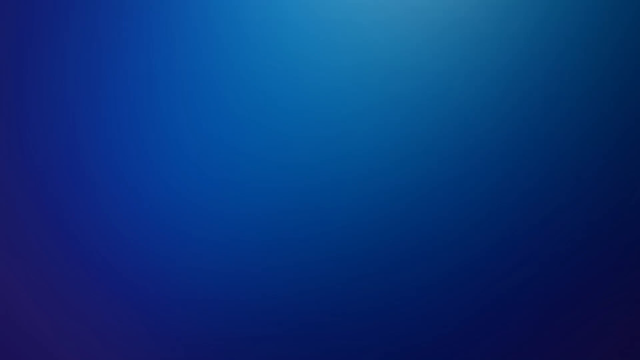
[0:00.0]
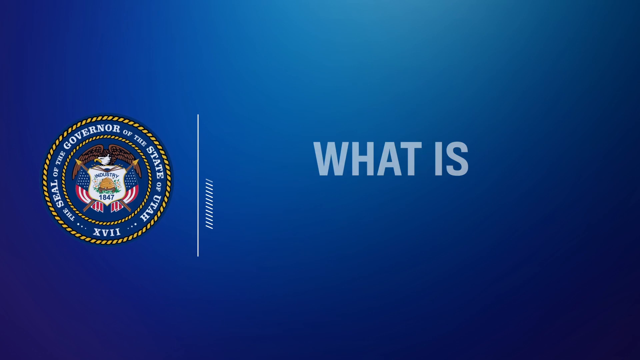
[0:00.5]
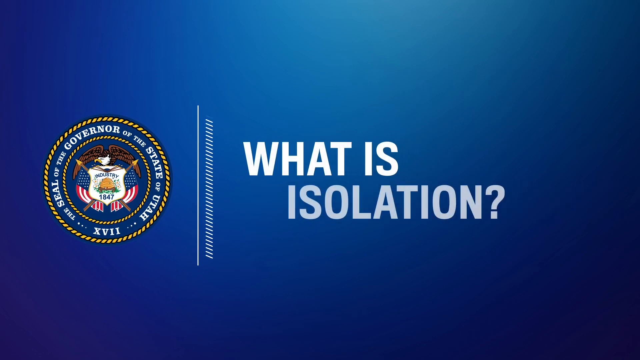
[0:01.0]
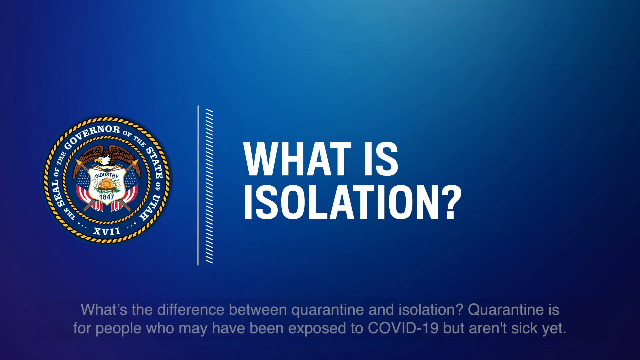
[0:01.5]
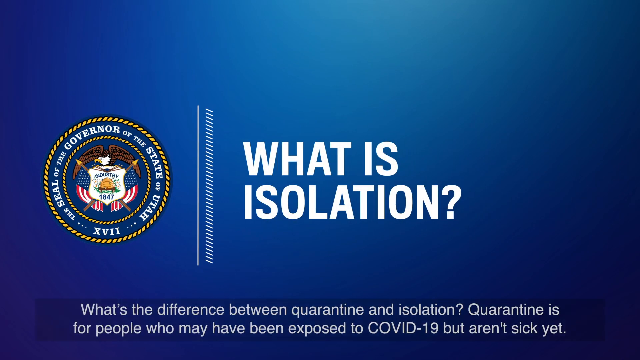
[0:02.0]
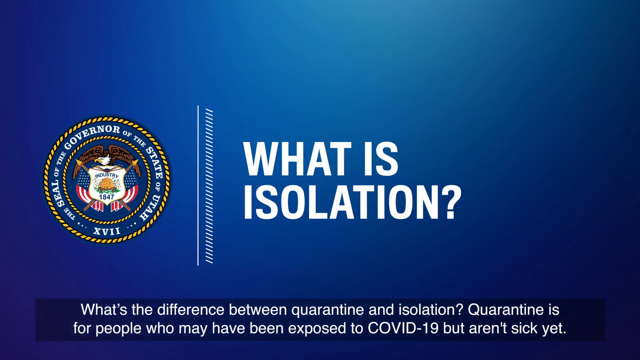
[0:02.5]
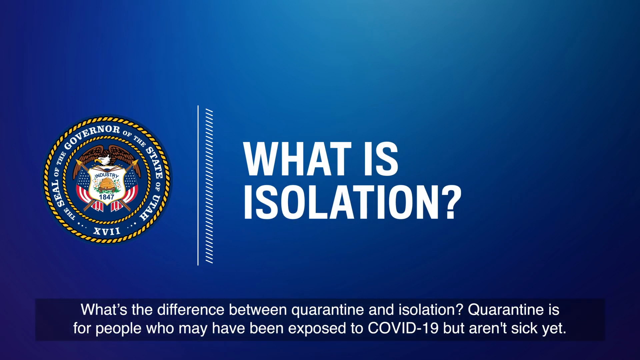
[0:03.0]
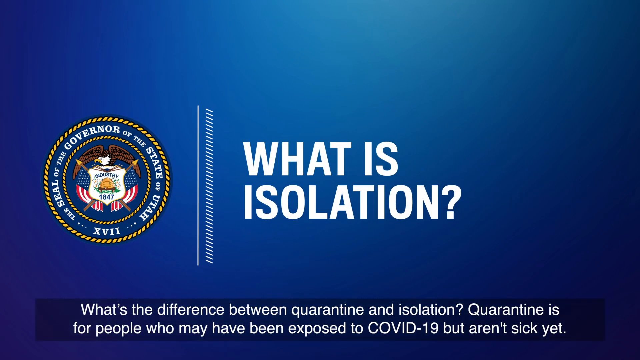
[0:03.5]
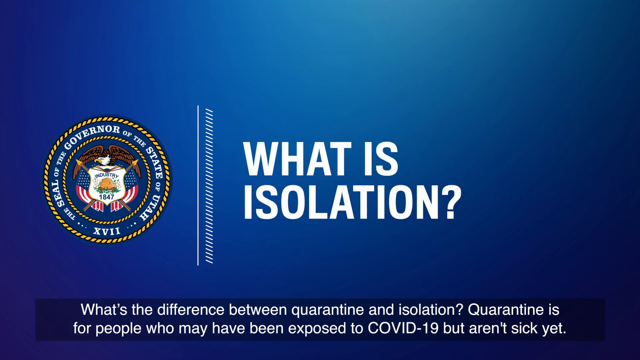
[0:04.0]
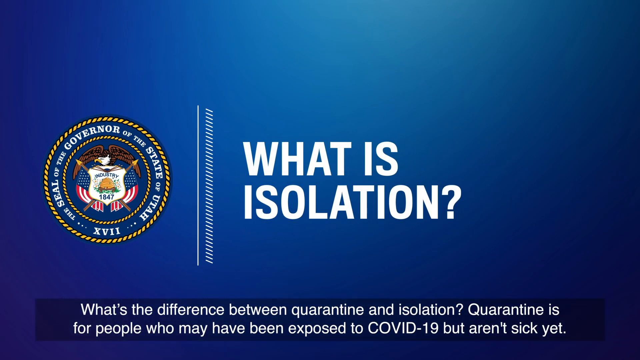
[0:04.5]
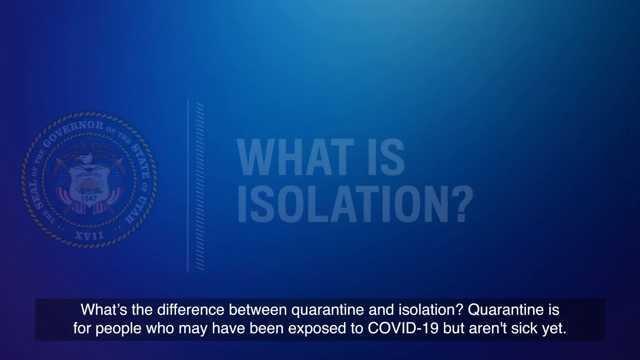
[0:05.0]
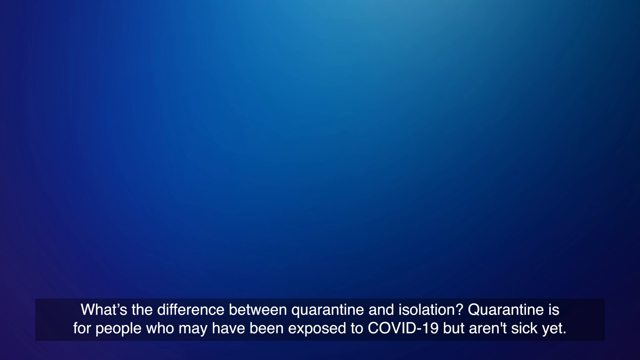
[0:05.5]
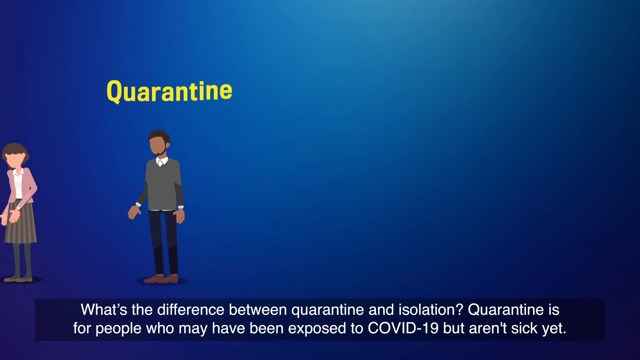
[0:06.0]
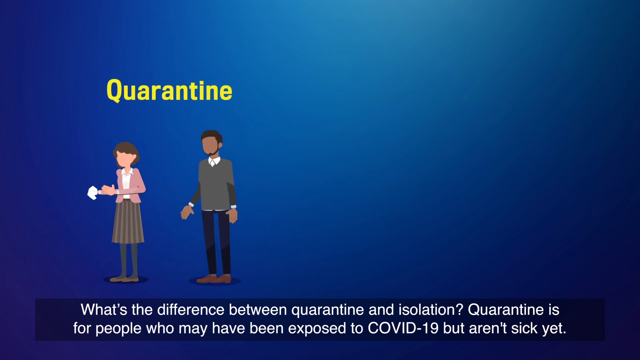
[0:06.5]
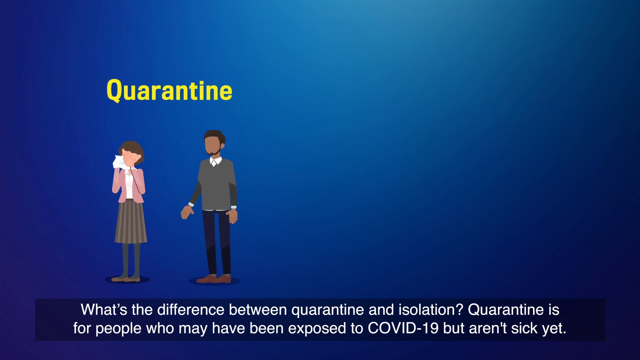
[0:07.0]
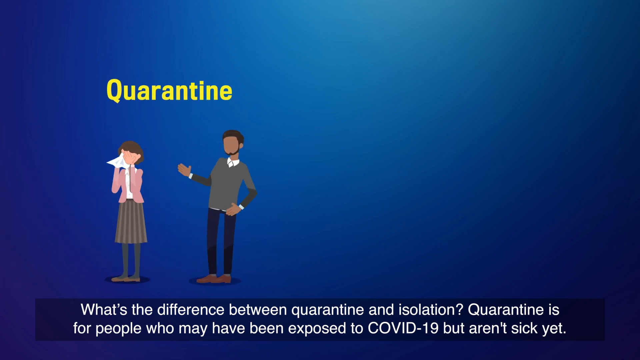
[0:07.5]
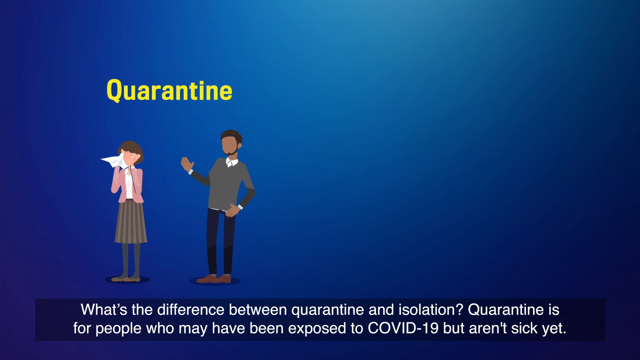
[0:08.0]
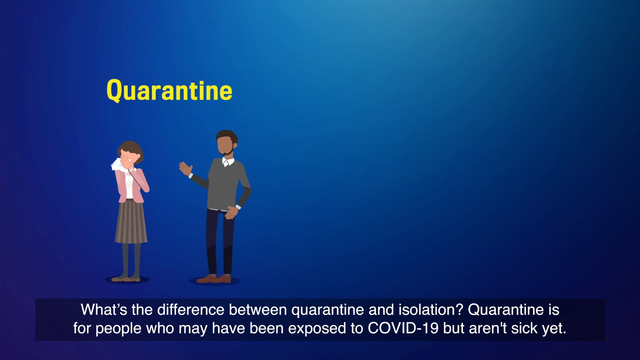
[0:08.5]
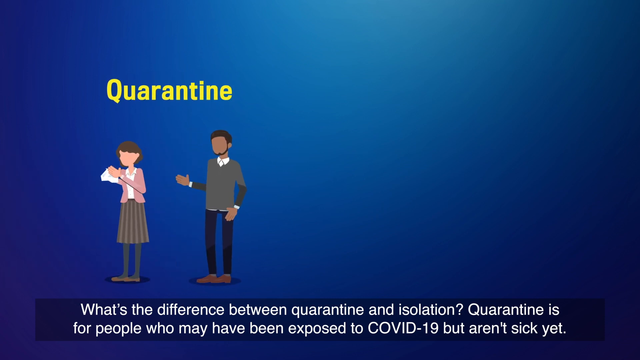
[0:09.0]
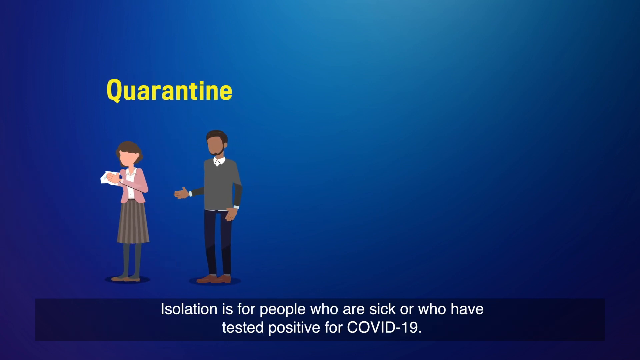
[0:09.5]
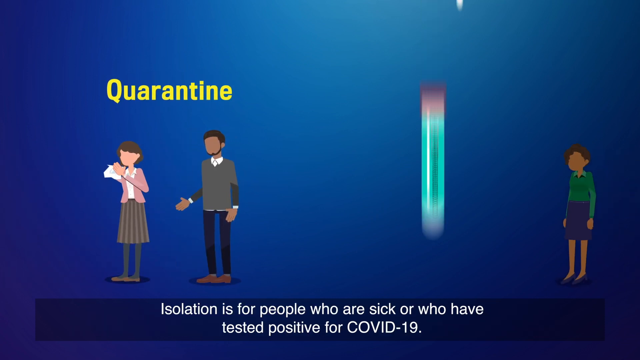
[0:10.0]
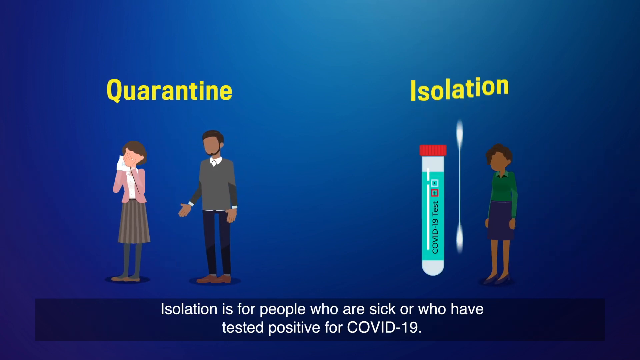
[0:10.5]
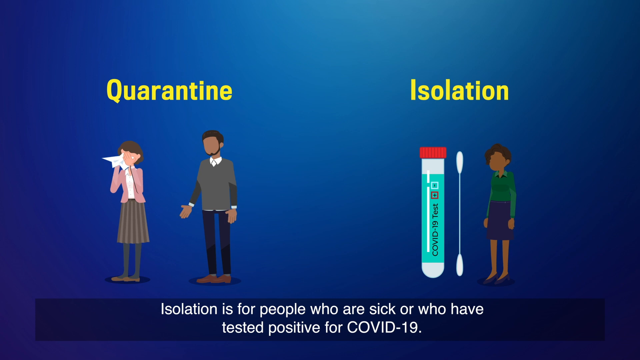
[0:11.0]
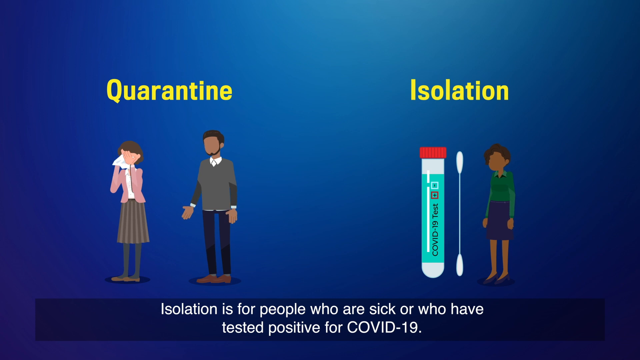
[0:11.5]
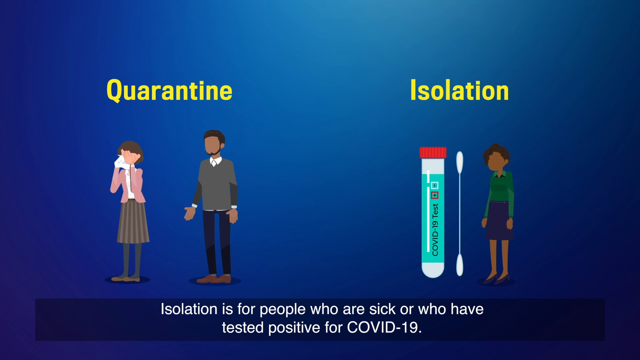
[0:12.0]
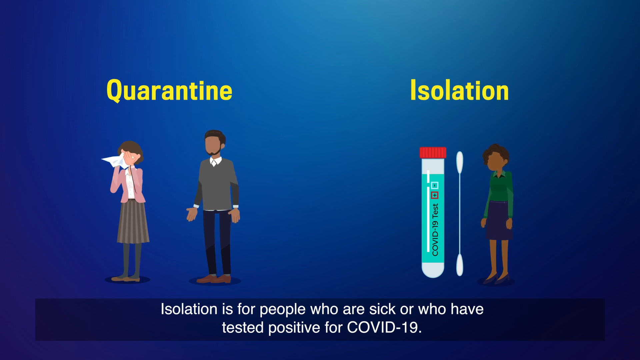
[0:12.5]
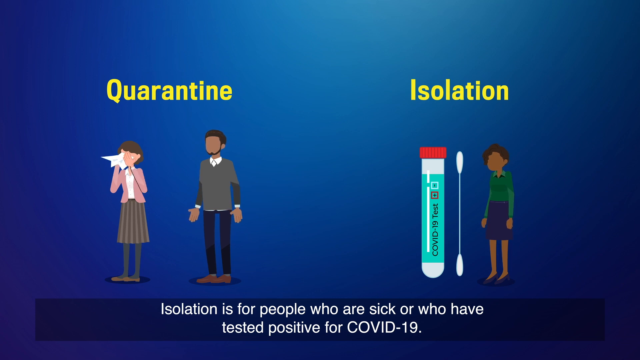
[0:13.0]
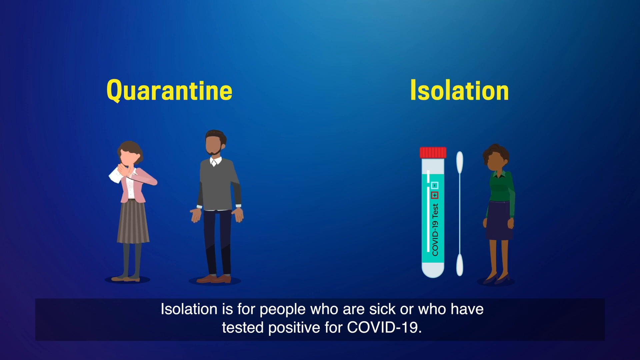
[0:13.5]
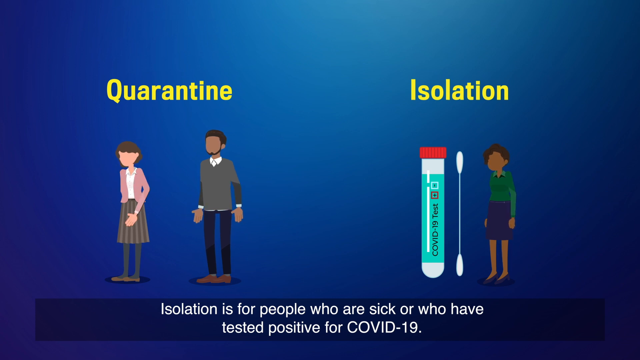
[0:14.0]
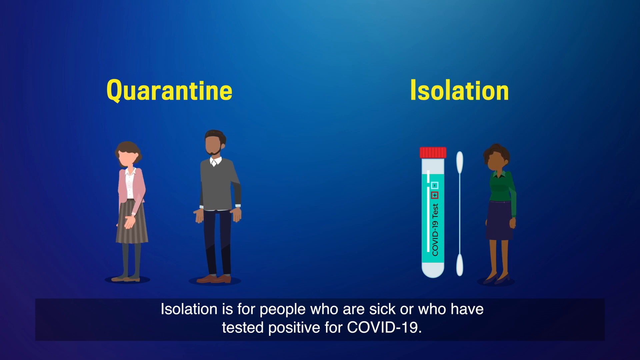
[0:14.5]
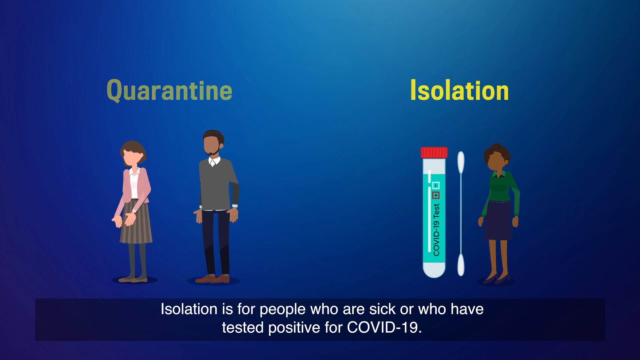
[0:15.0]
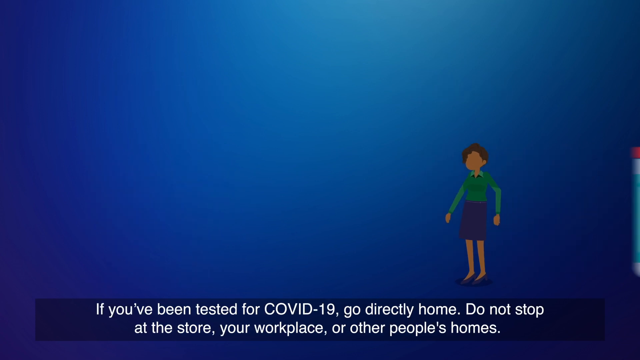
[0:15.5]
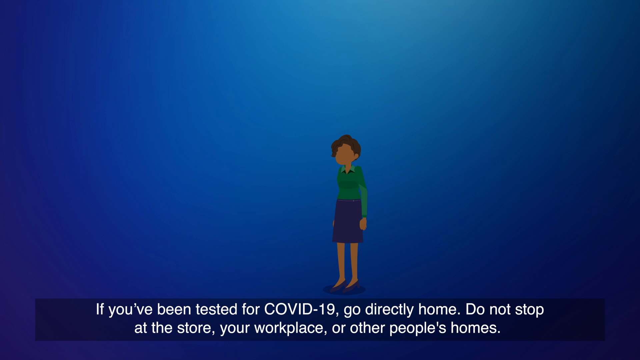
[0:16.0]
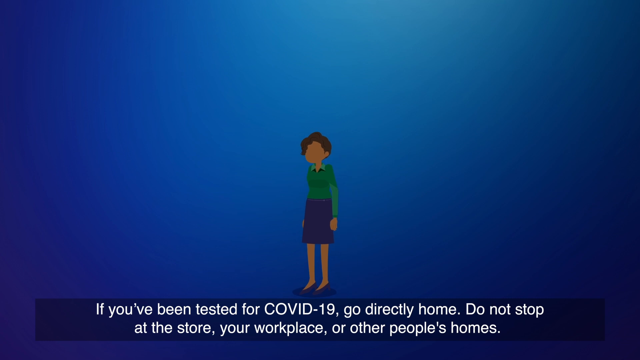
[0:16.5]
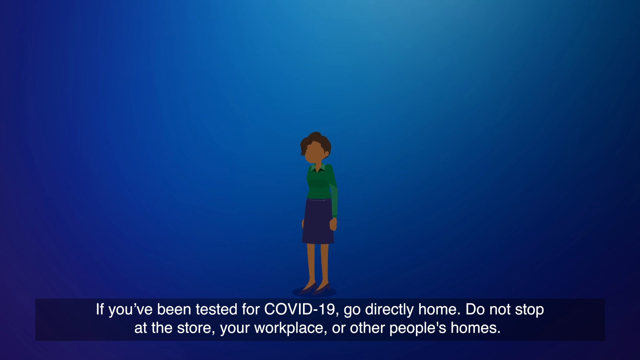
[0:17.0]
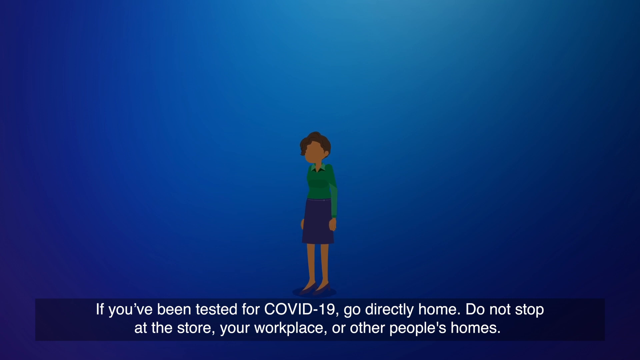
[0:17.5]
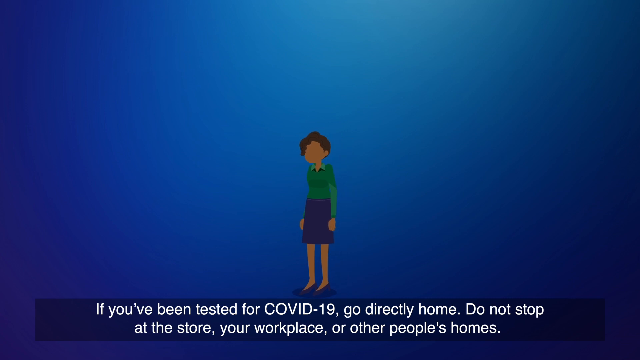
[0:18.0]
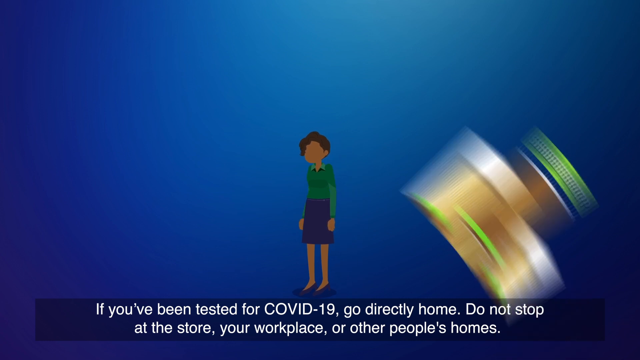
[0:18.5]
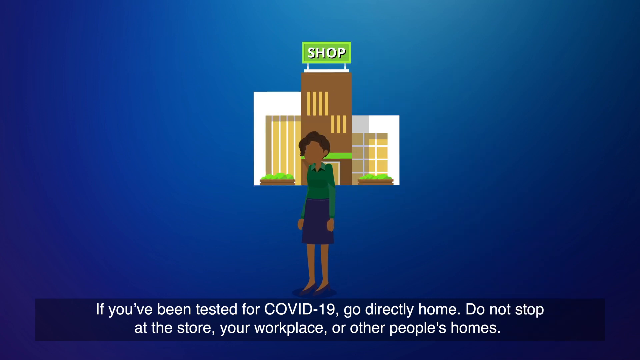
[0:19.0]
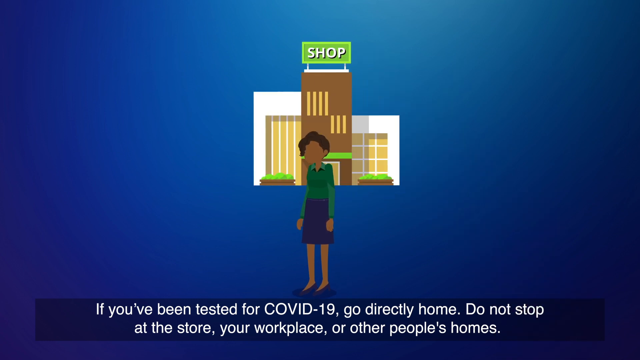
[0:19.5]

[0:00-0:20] The video opens on a blue screen. On the left side is a logo or stamp, with the words "Governor of the State of Utah" wrapping around it and an eagle with a shield in its center. The words "what is isolation" appear on the right side of the screen and move to the left side. A drawing of two people then appears: a Caucasian woman in a pink sweater, white shirt and brown skirt, and, to her right, an African-American man in a brown shirt and blue pants. The woman has her back to him. The word "quarantine" appears in yellow letters. She is blowing her nose with a white scarf. Then, to the right of them, a vial with a swab appears, along with a woman in a green top and blue skirt. Some buildings appear behind her, one of which says "shop".